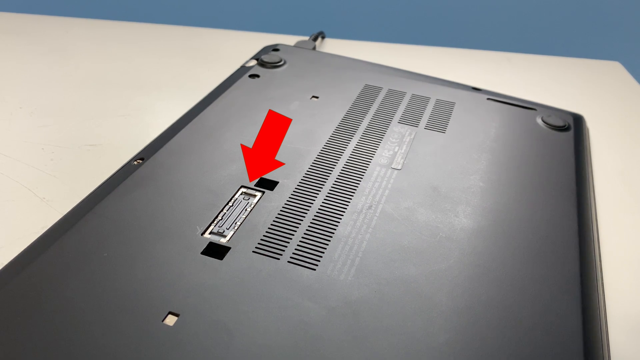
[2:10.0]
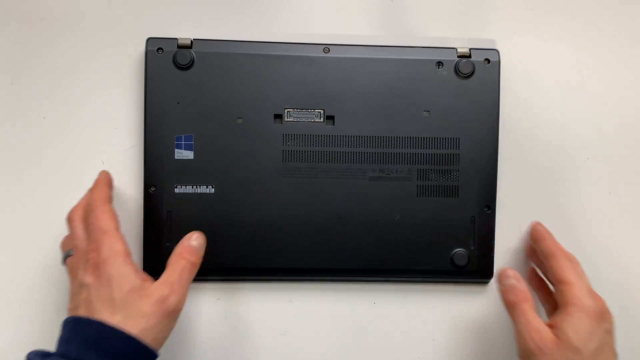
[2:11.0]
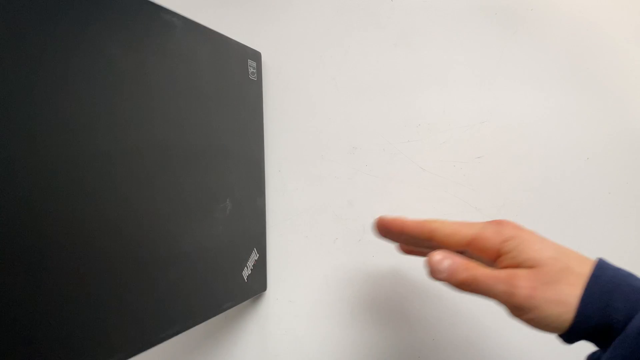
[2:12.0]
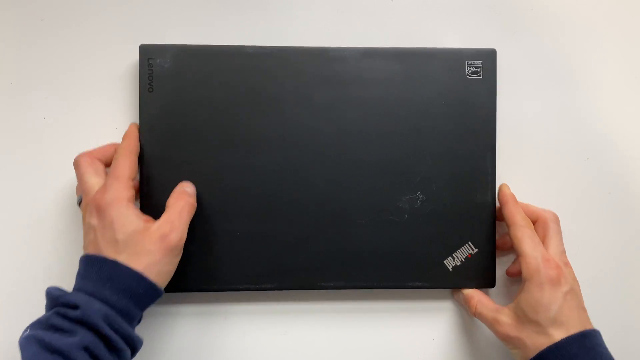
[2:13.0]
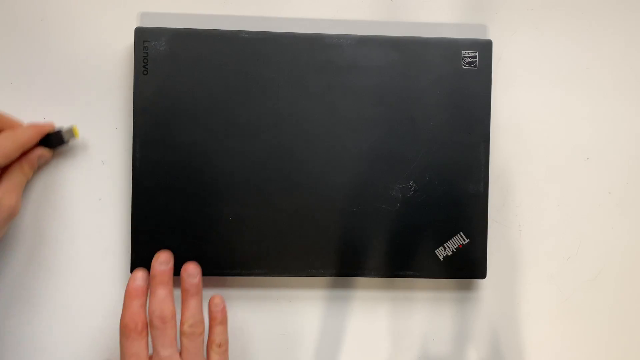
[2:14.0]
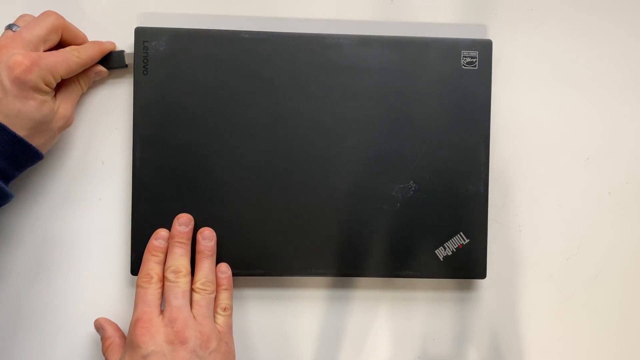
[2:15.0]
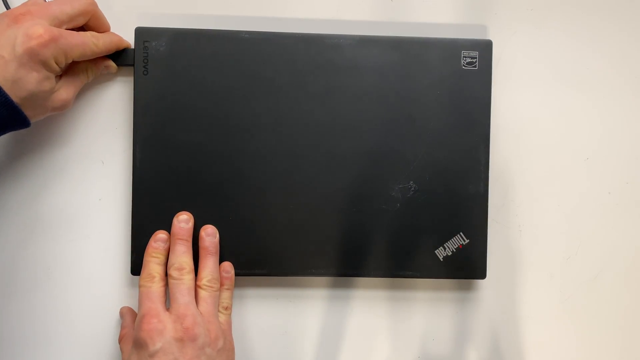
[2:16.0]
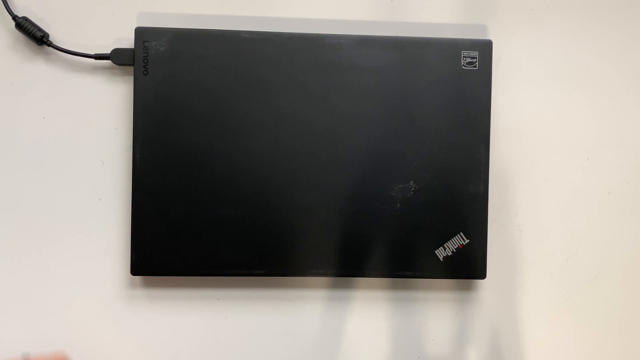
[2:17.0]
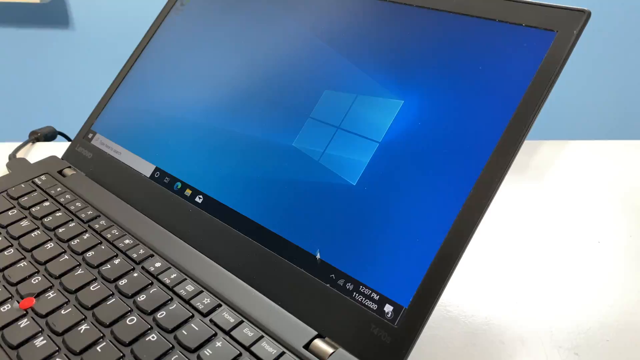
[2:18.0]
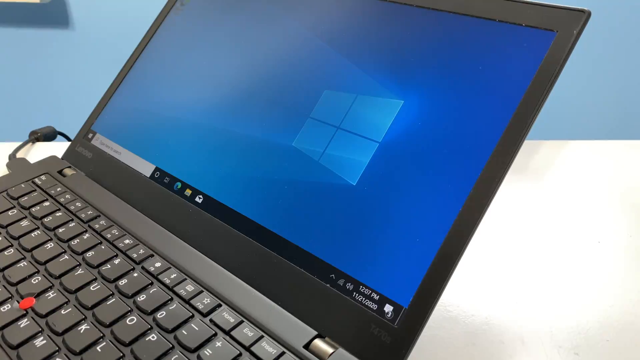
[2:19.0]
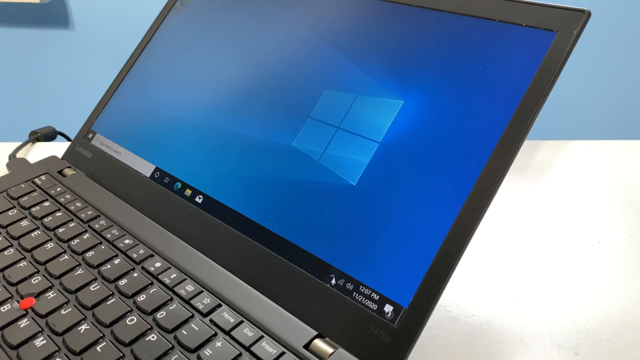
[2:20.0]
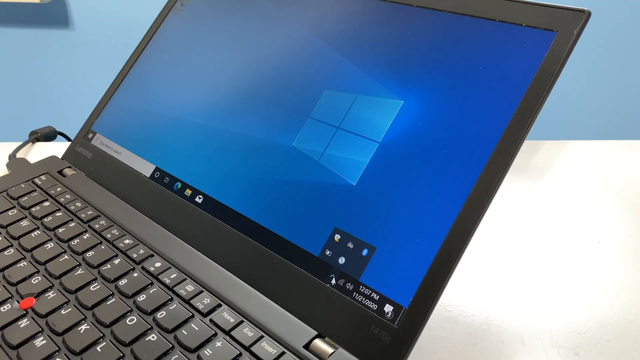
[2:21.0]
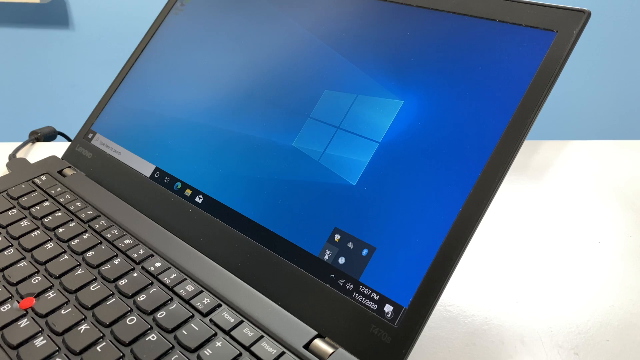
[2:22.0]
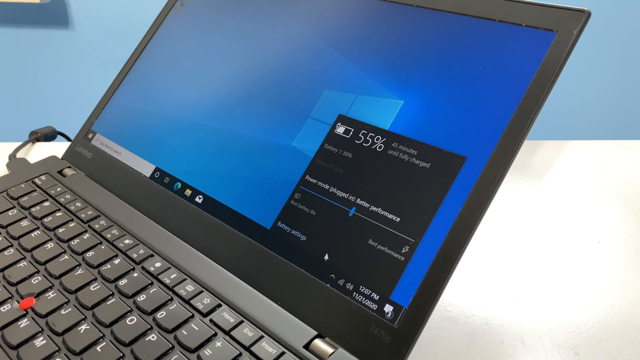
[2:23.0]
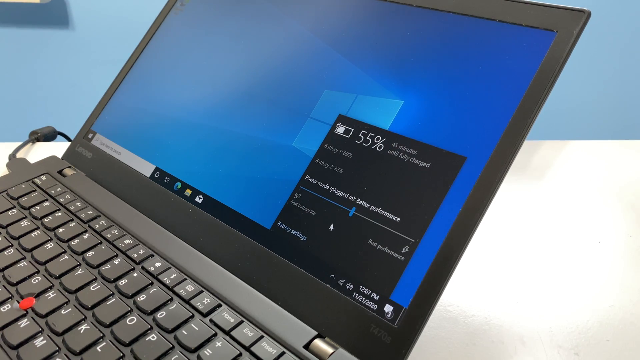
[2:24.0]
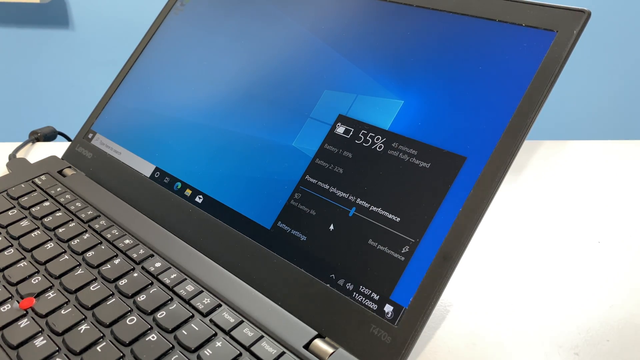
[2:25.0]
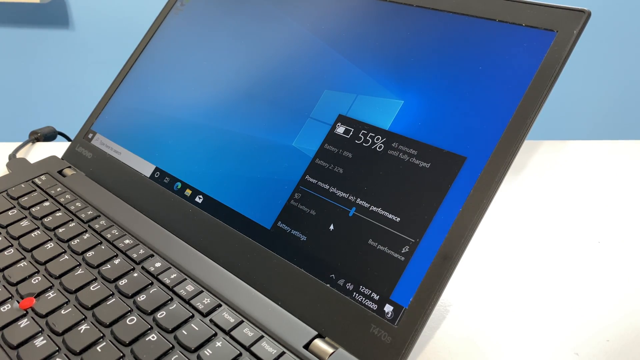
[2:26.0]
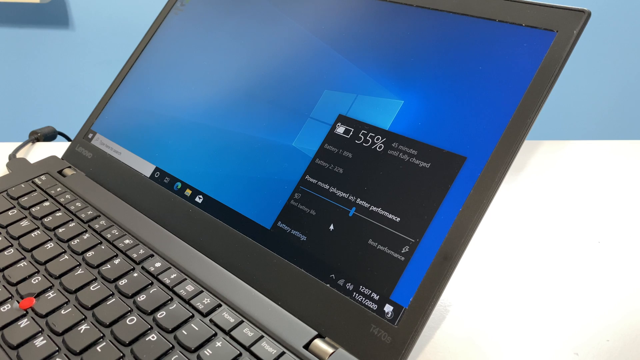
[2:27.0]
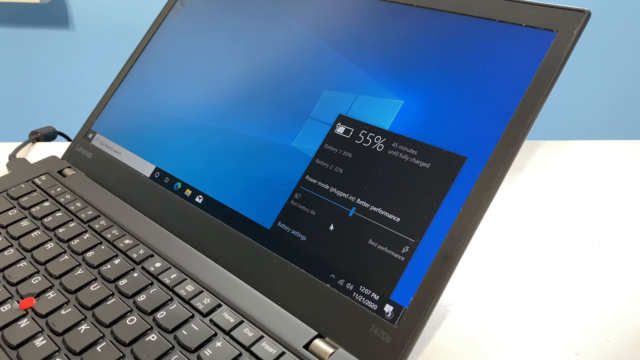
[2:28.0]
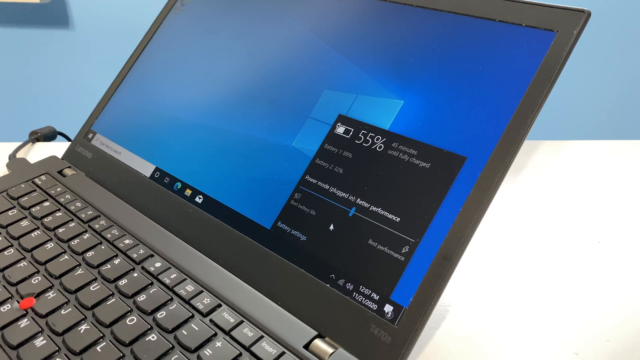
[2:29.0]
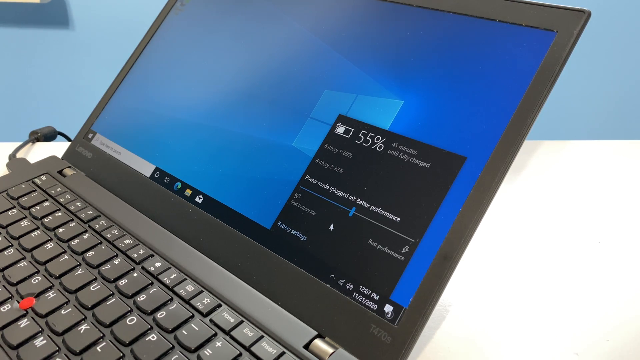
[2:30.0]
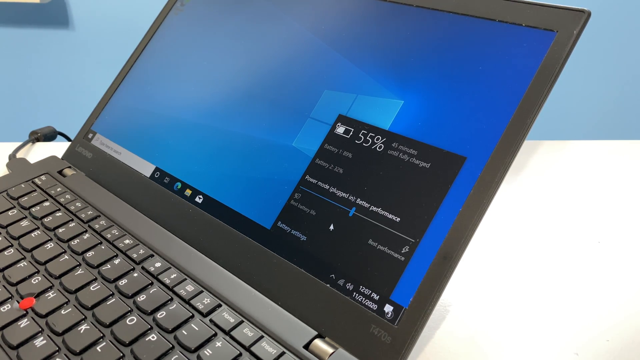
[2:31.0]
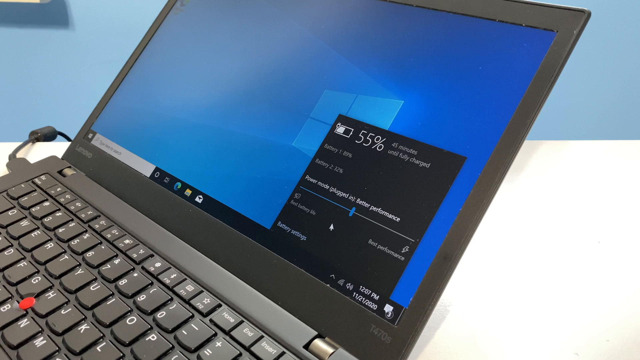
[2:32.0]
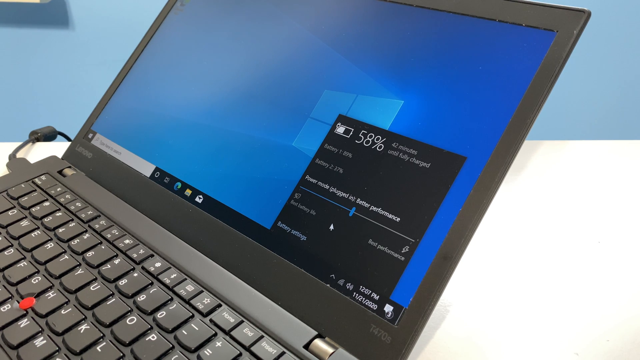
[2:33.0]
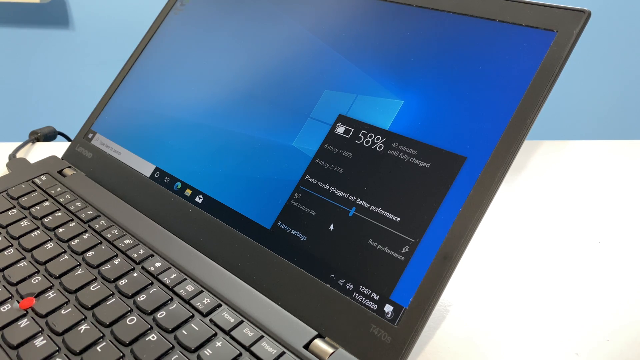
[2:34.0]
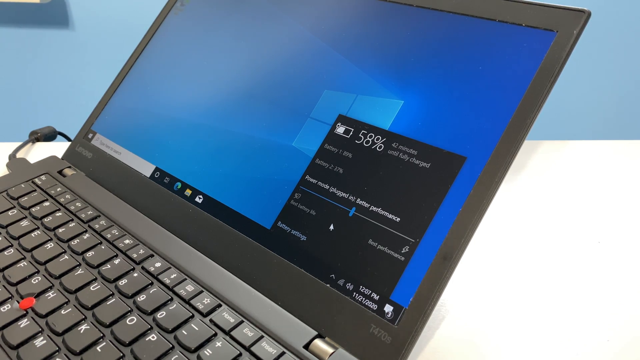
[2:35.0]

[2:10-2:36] The man turns the laptop over and plugs it in. On the top of the laptop is the word "ThinkPad", and the word "Lenovo" also appears on the laptop; it is a Lenovo laptop with a Lenovo battery in the back. The man turns on the laptop and goes to the battery again, where battery 1 and battery 2 still appear in the same pop-up seen earlier in the video.